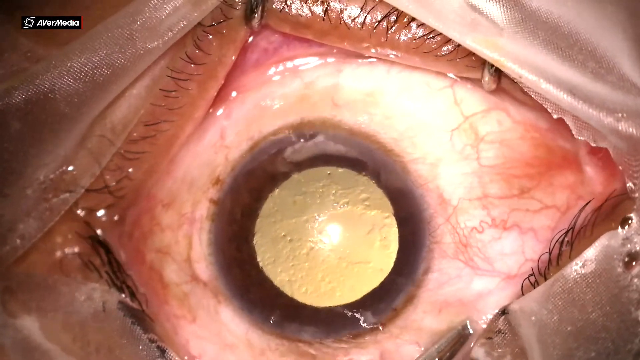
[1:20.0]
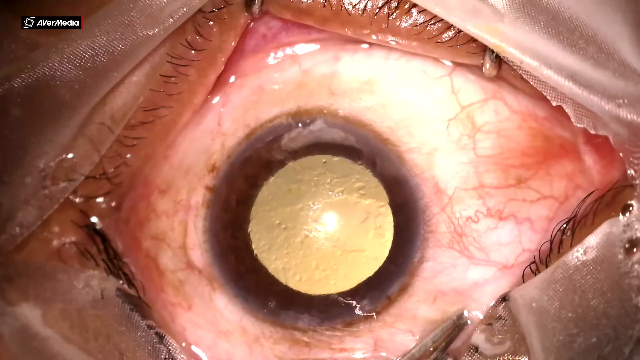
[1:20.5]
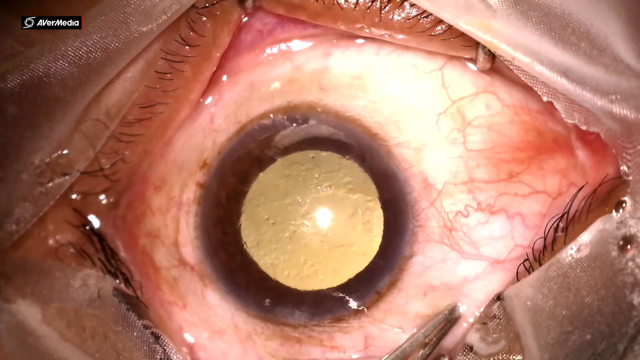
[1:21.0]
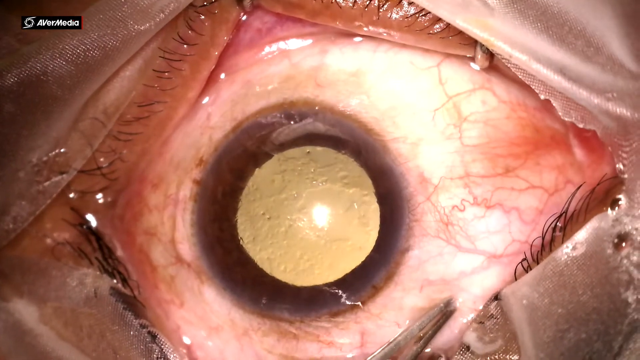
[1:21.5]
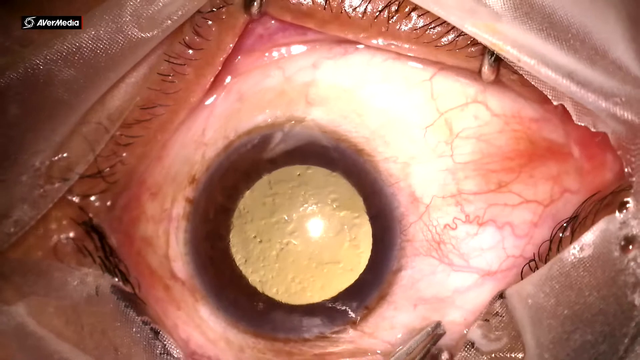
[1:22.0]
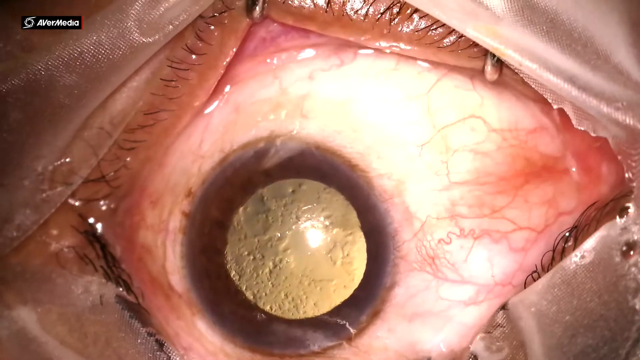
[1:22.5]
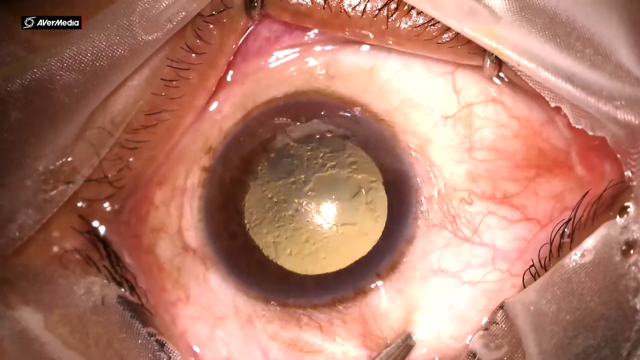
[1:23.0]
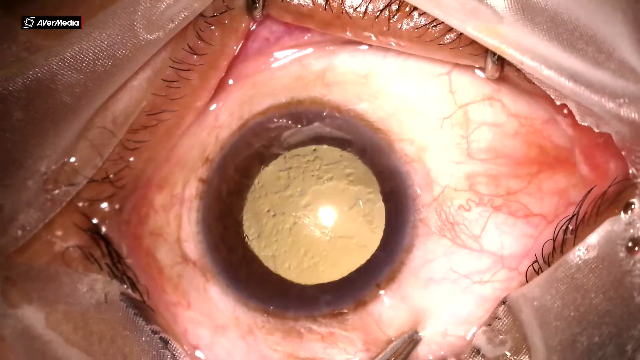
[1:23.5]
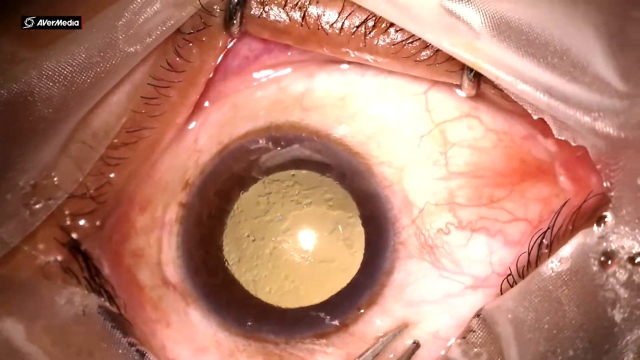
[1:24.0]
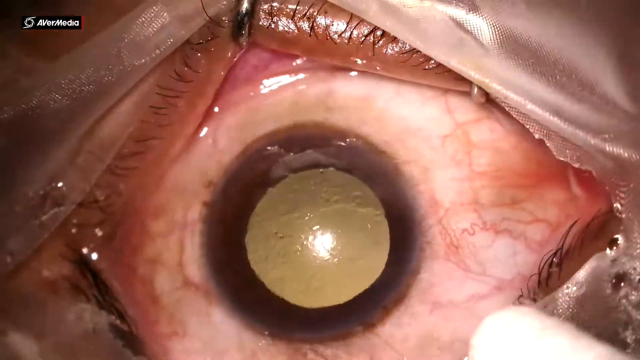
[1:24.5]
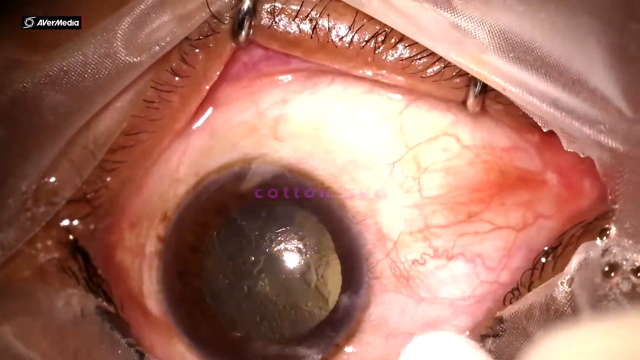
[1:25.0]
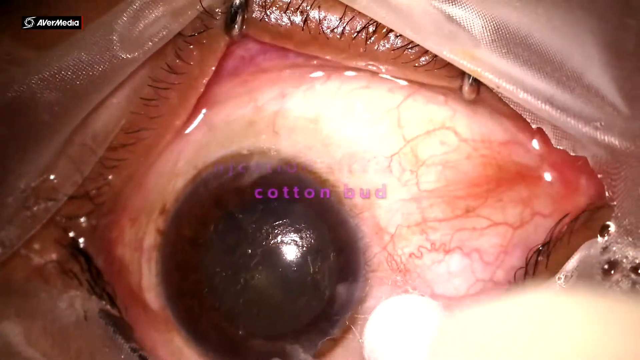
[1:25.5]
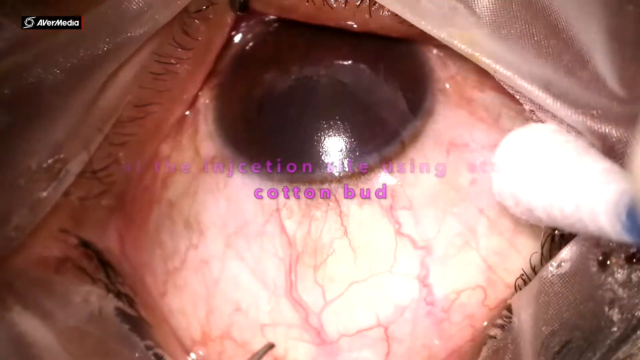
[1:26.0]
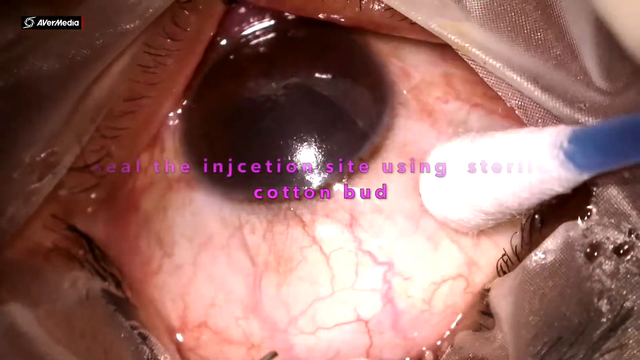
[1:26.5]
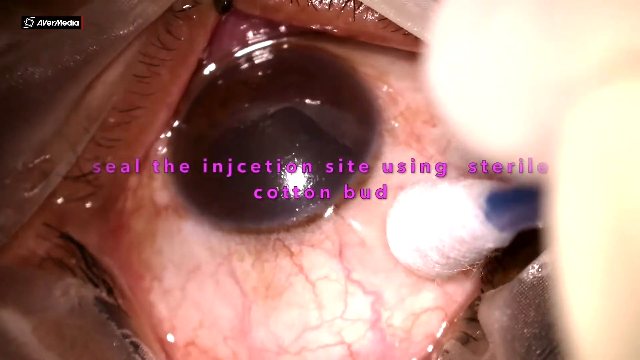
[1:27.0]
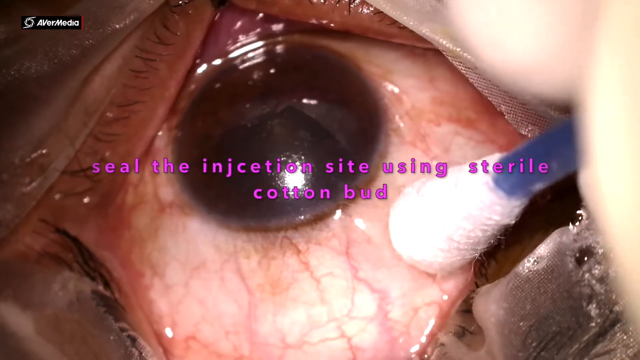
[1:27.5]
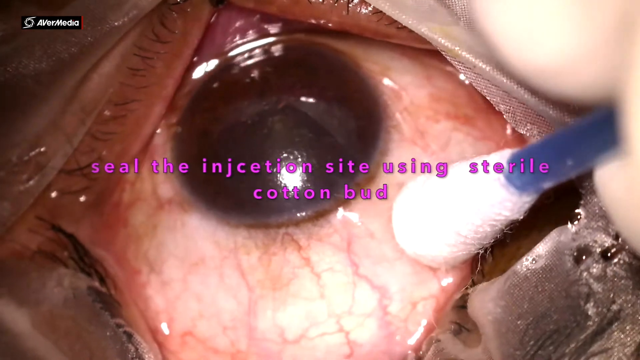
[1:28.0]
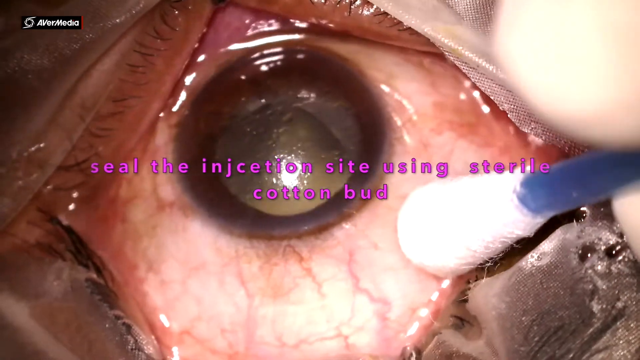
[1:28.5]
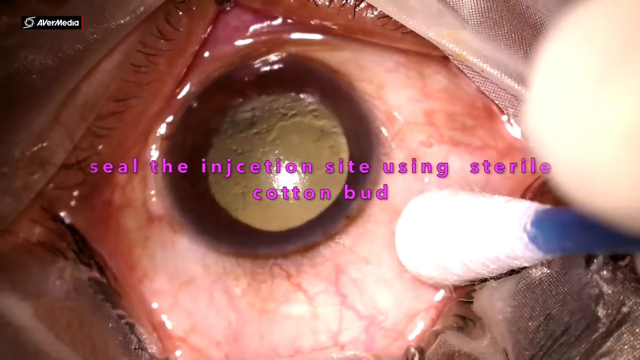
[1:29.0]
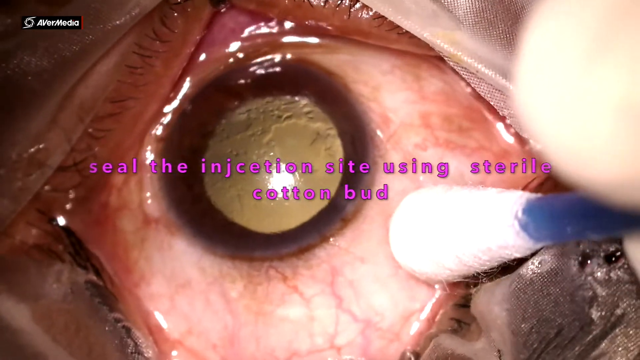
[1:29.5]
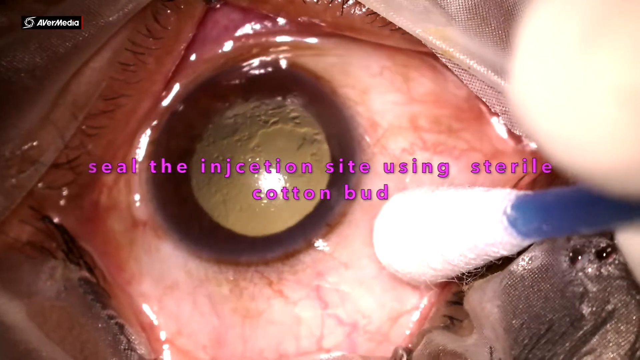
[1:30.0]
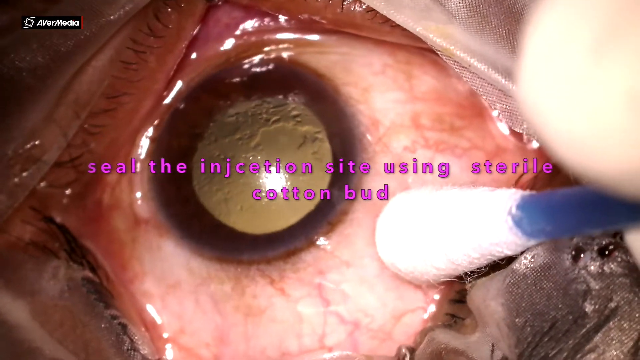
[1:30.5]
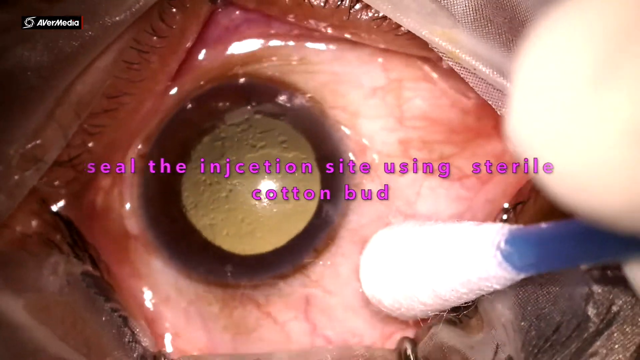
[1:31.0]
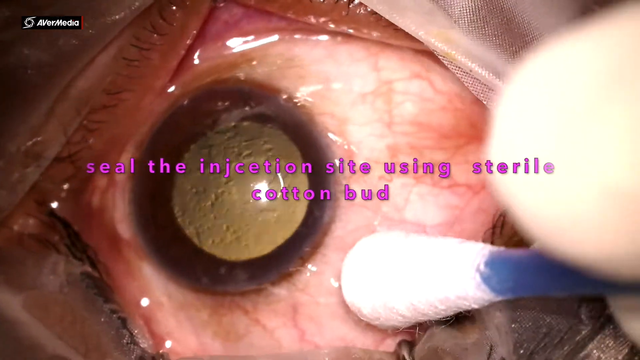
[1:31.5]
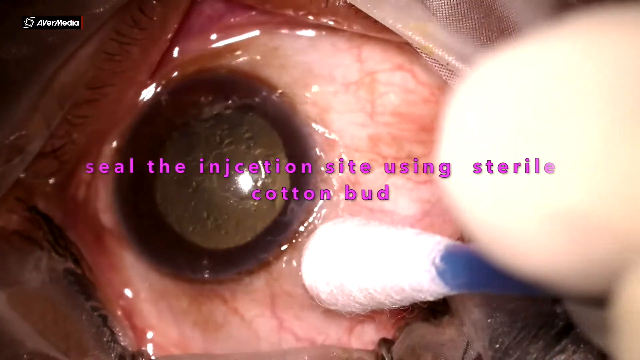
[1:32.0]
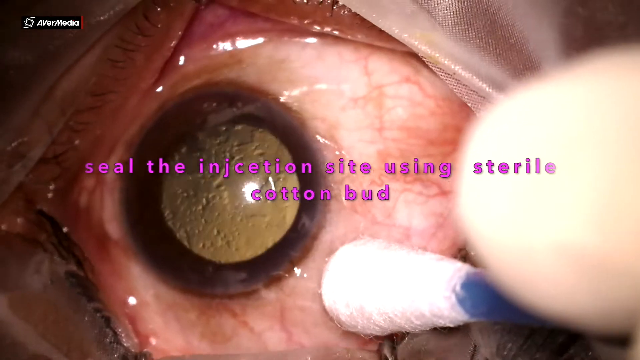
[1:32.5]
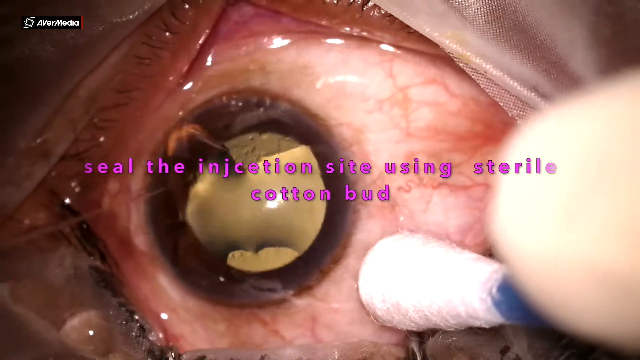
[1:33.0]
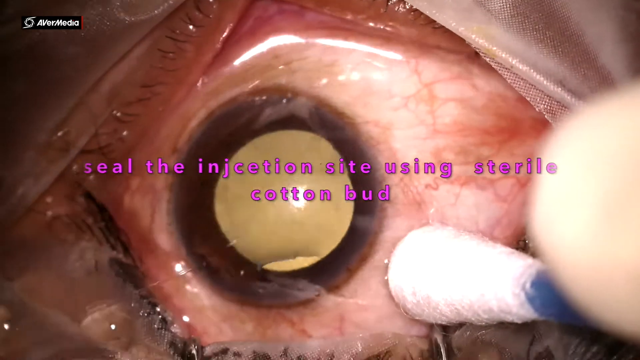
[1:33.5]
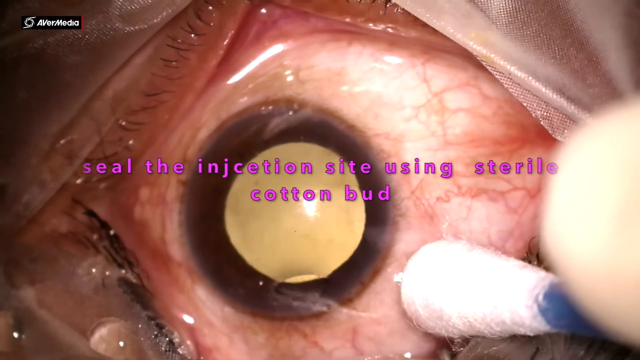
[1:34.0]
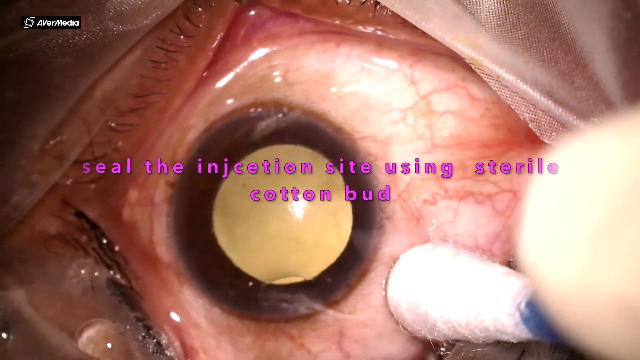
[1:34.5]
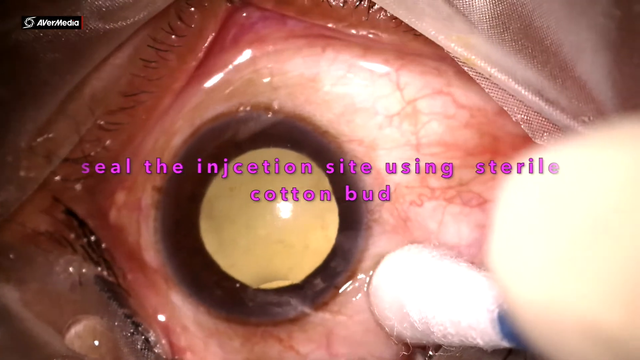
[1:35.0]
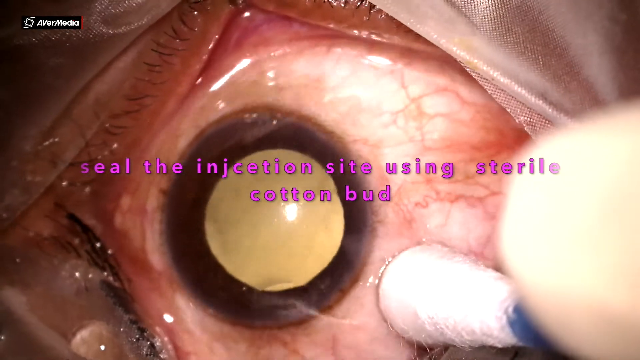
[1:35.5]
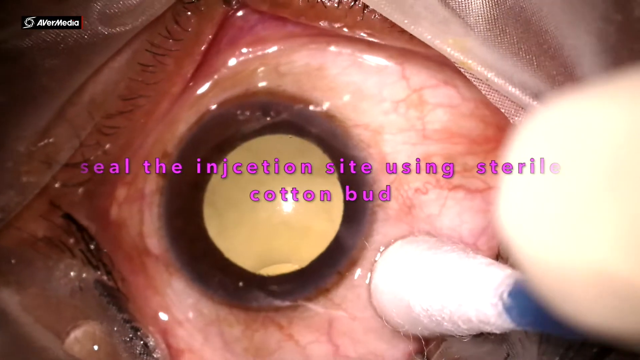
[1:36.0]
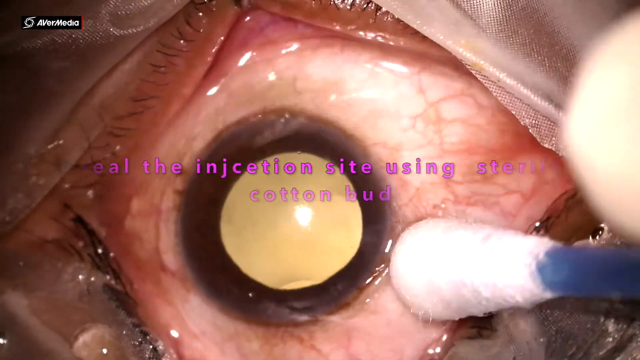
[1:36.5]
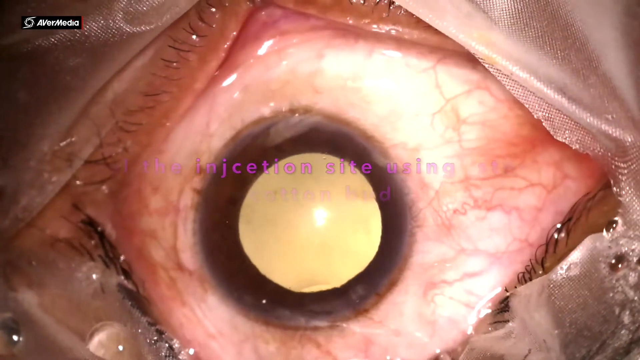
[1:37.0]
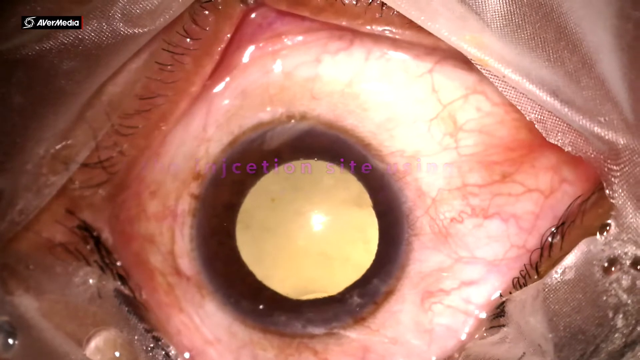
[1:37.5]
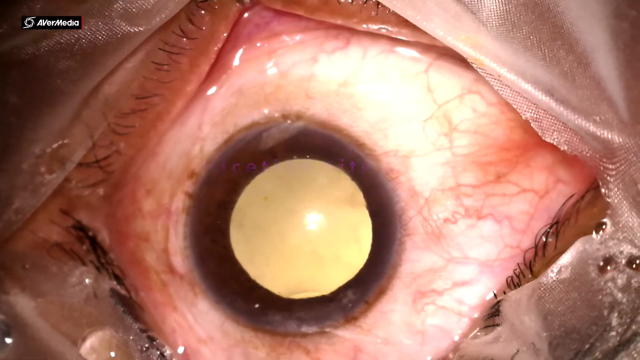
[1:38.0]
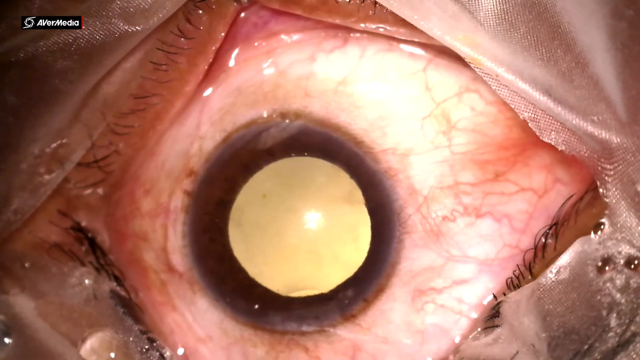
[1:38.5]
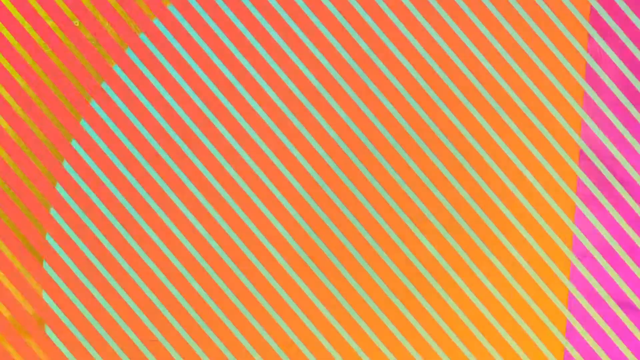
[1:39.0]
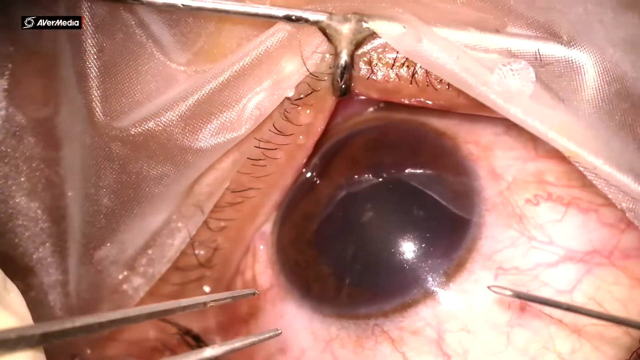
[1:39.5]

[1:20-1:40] The eyeball continues to look very yellow as it looks around. A Q-tip is used, and text in the middle of the screen reads "seal the injection site using sterile cotton bud". Some liquid appears to pop up out of the eyeball, or possibly liquid is put on the eyeball to clean it. The view then quickly transitions to what looks like the top left of the eyeball. The eye is now very red and looks very irritated.